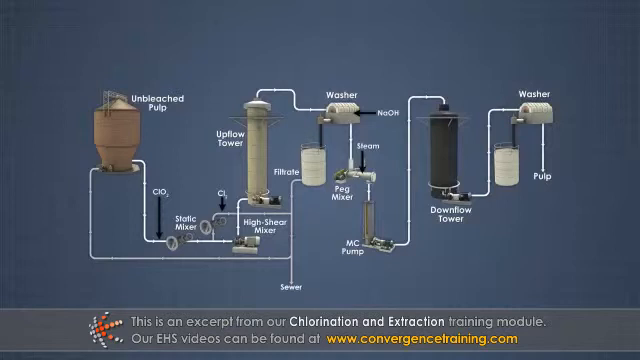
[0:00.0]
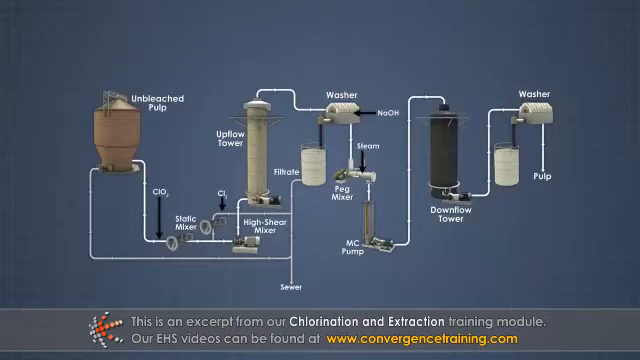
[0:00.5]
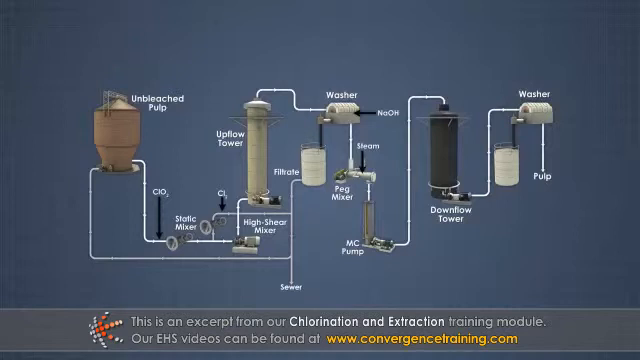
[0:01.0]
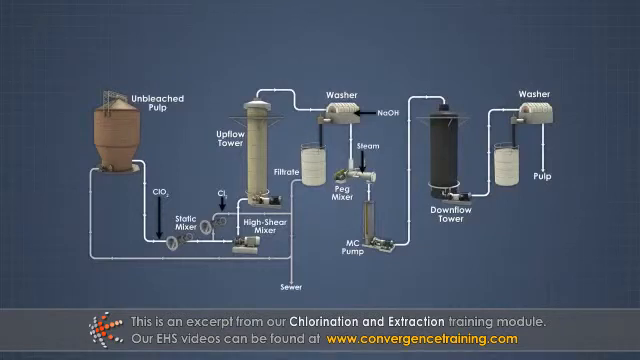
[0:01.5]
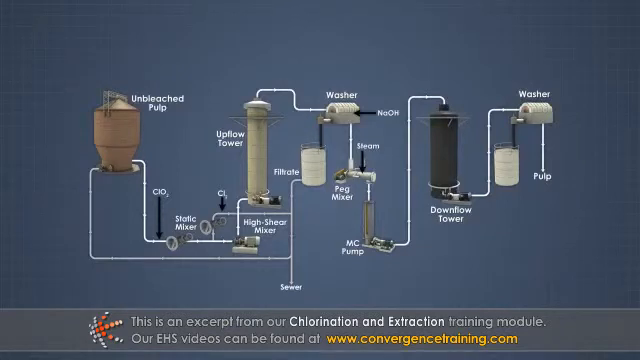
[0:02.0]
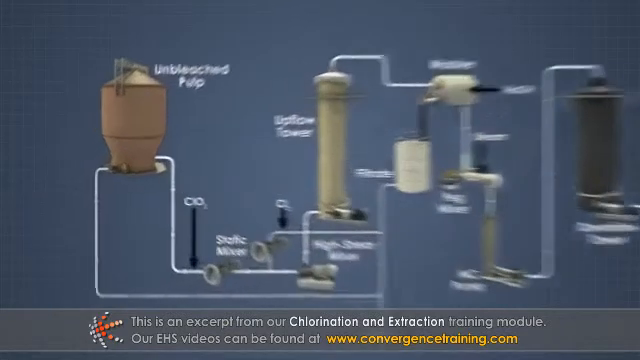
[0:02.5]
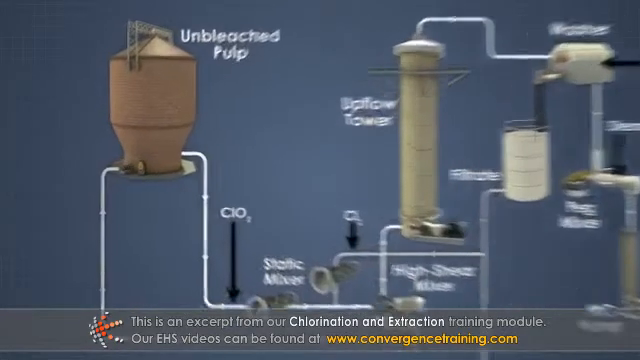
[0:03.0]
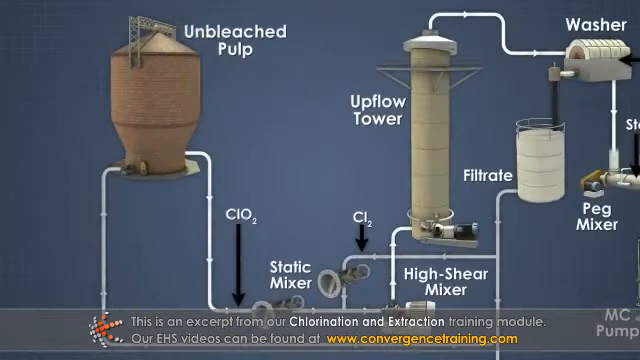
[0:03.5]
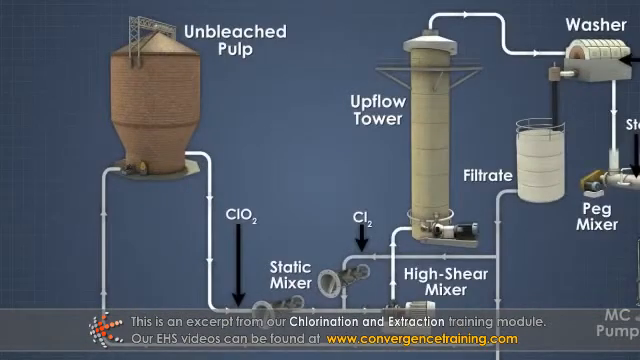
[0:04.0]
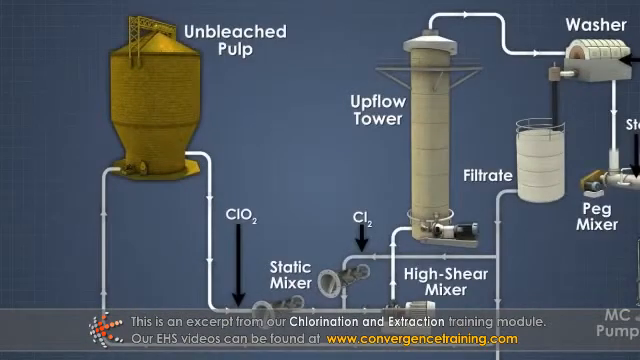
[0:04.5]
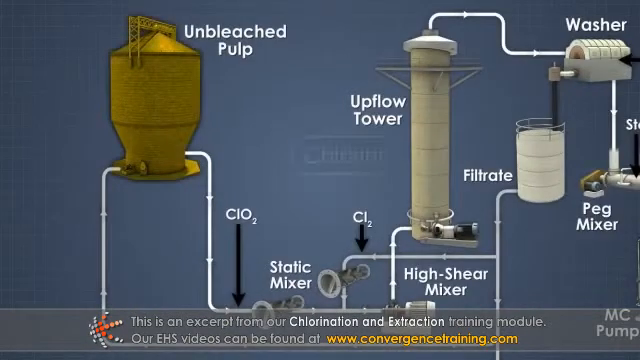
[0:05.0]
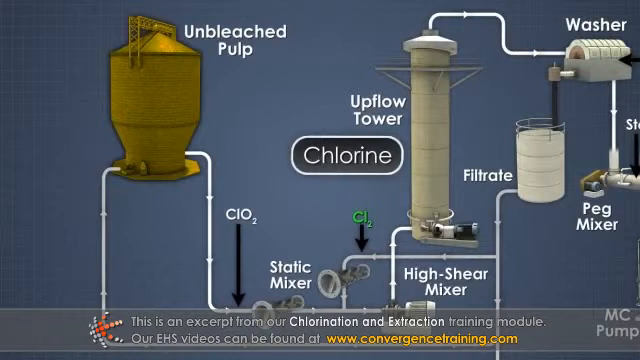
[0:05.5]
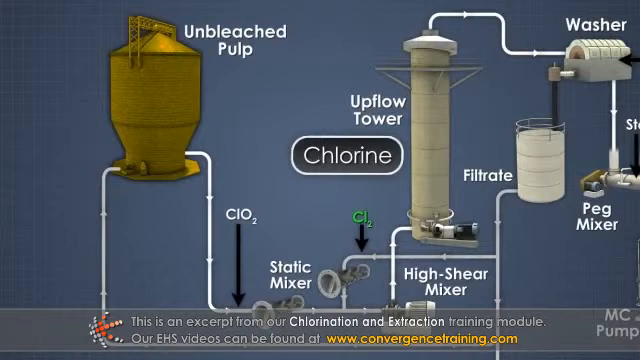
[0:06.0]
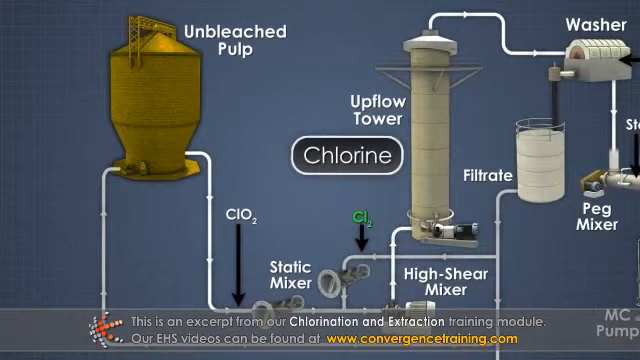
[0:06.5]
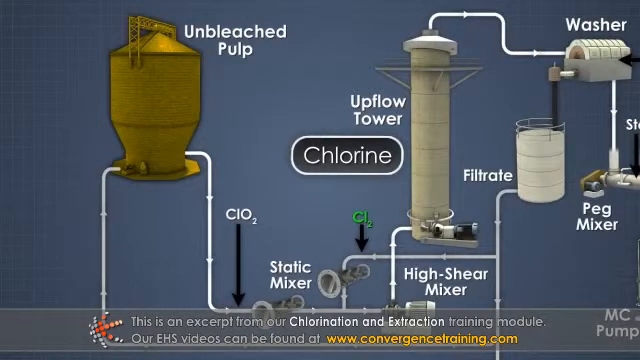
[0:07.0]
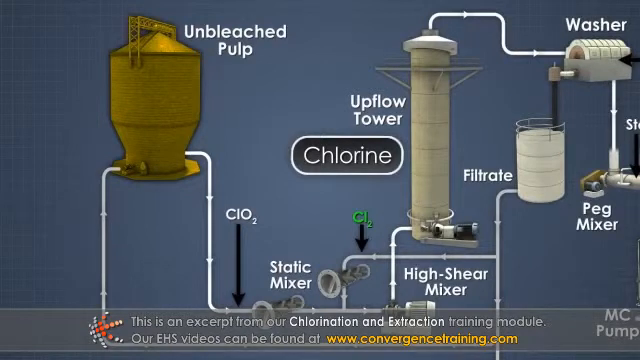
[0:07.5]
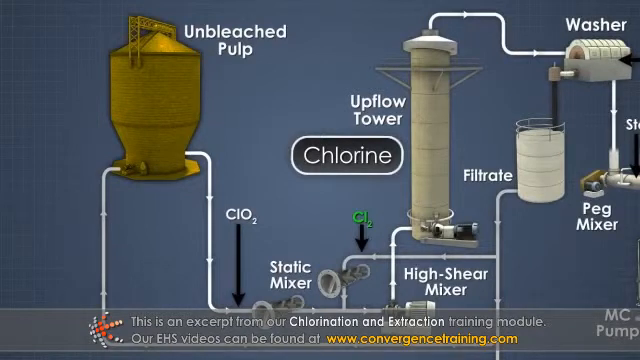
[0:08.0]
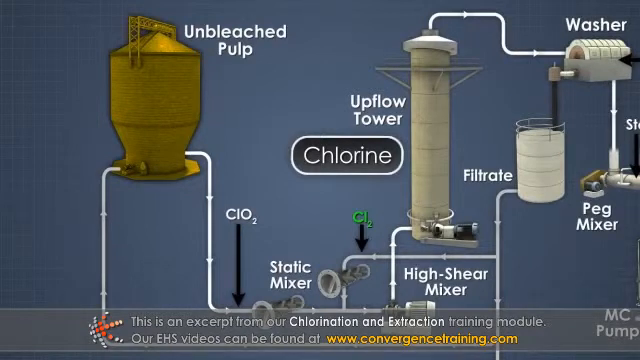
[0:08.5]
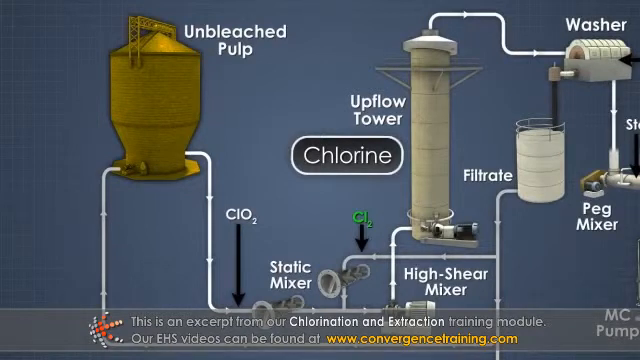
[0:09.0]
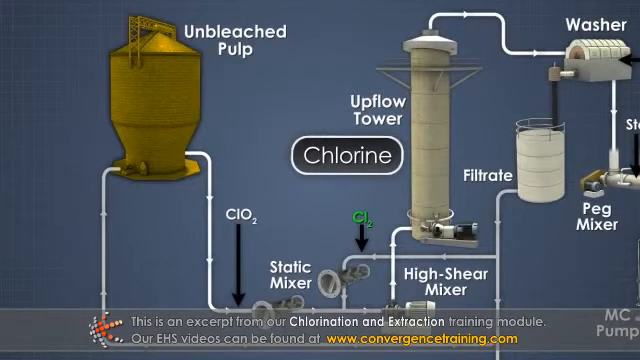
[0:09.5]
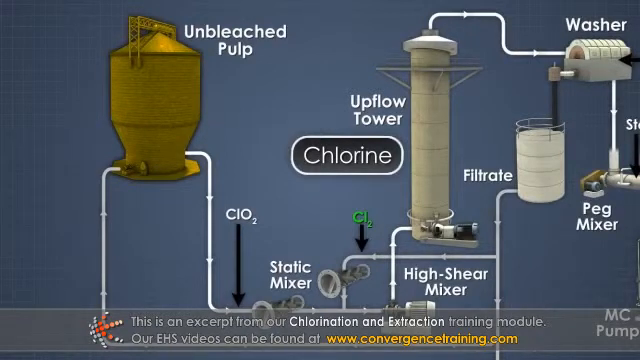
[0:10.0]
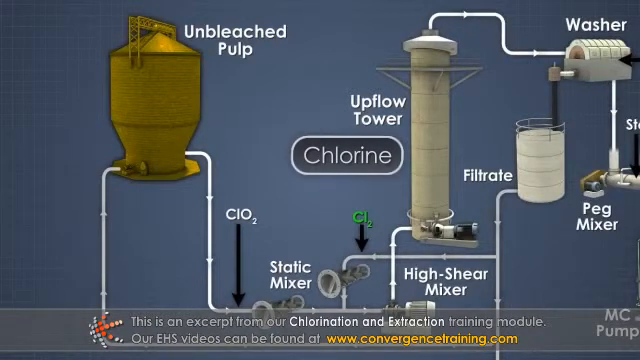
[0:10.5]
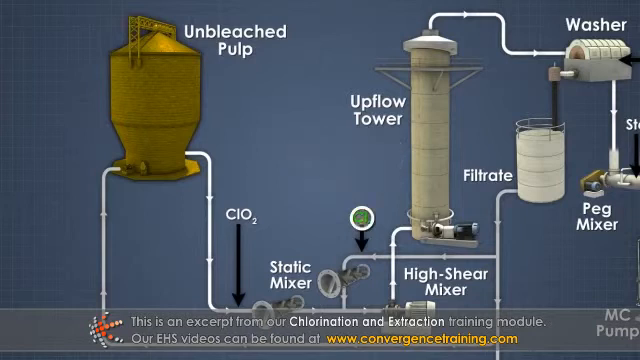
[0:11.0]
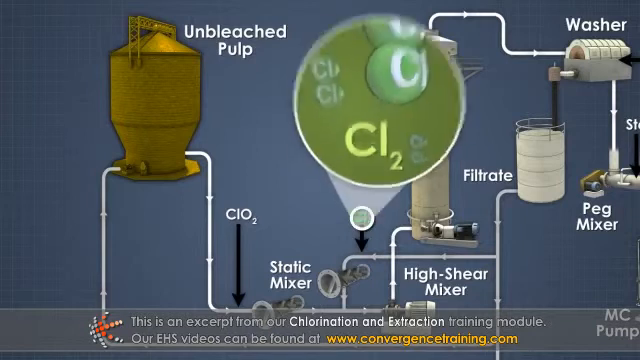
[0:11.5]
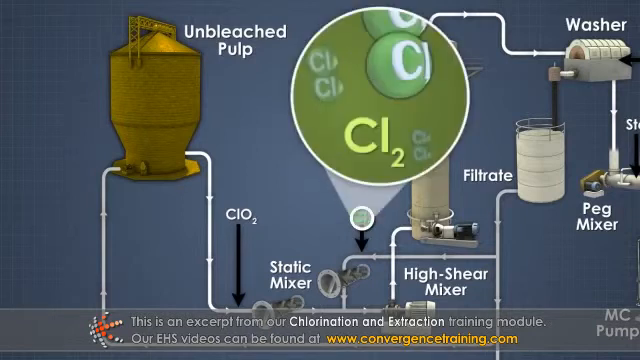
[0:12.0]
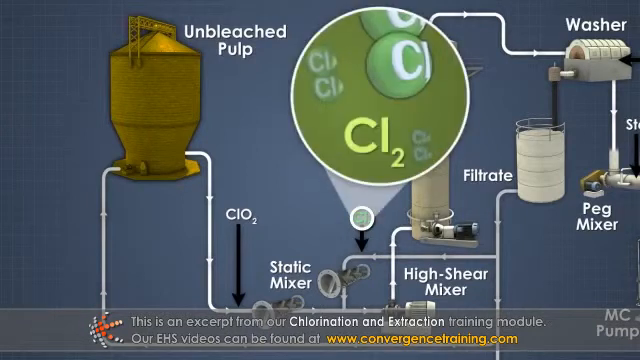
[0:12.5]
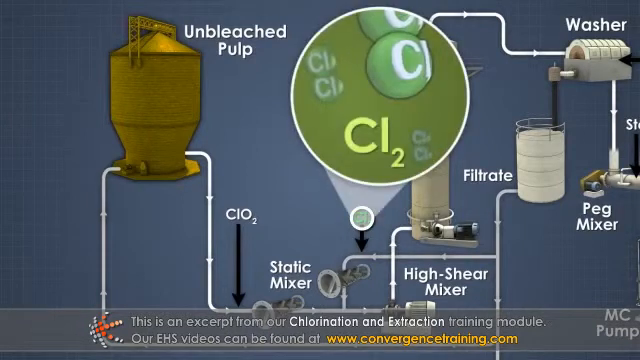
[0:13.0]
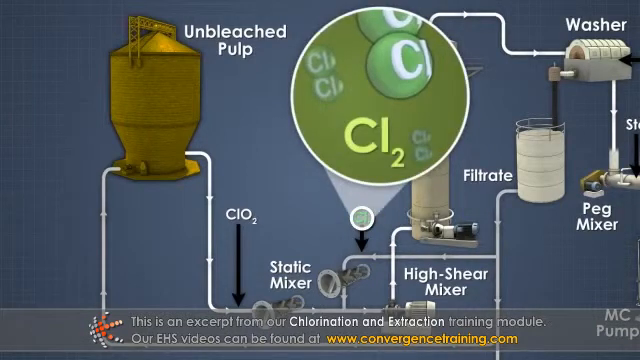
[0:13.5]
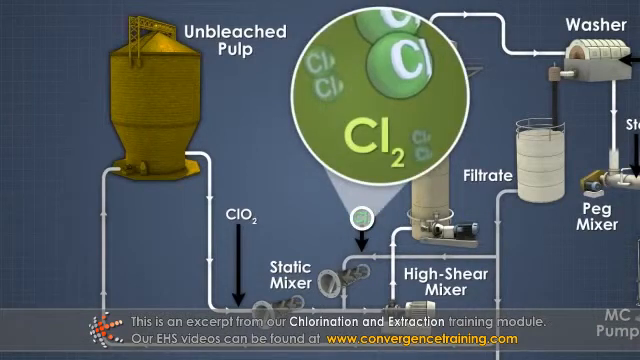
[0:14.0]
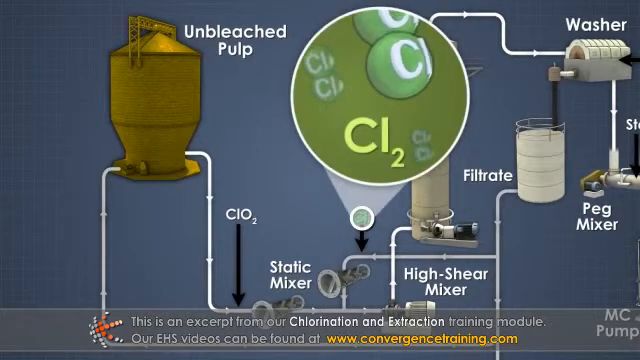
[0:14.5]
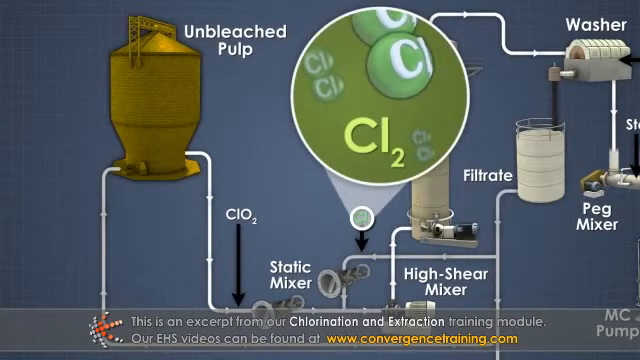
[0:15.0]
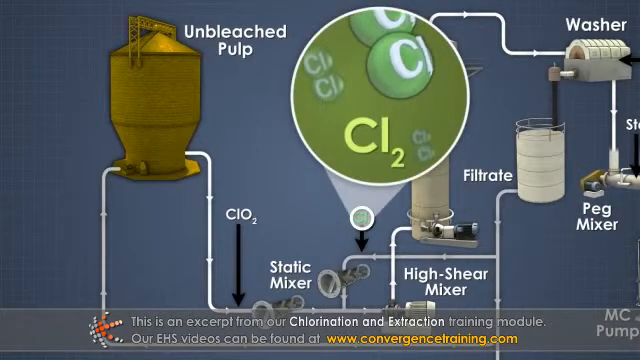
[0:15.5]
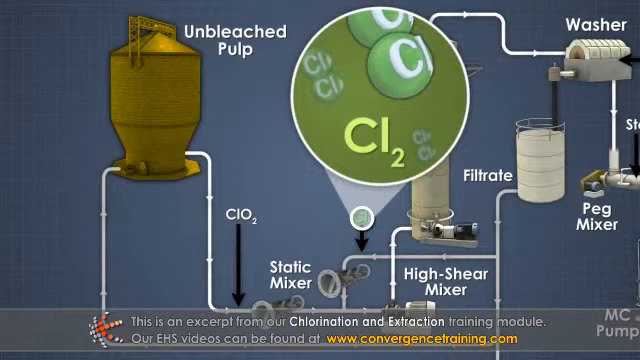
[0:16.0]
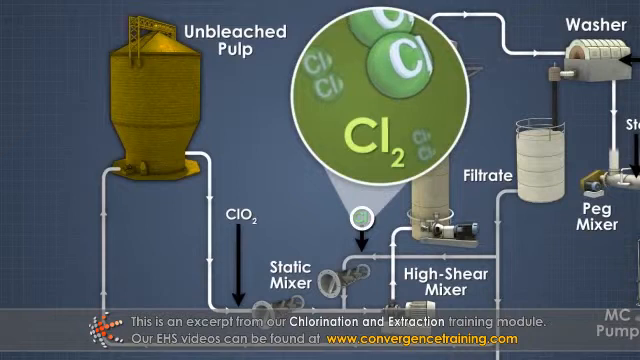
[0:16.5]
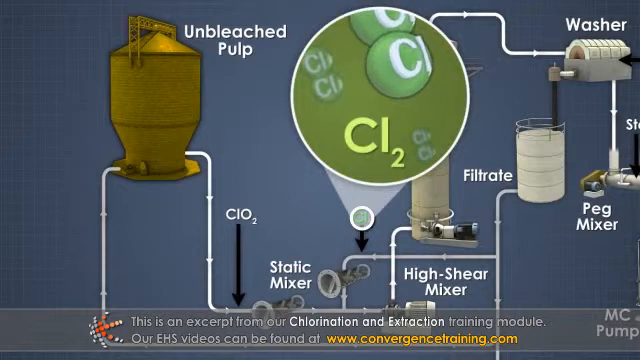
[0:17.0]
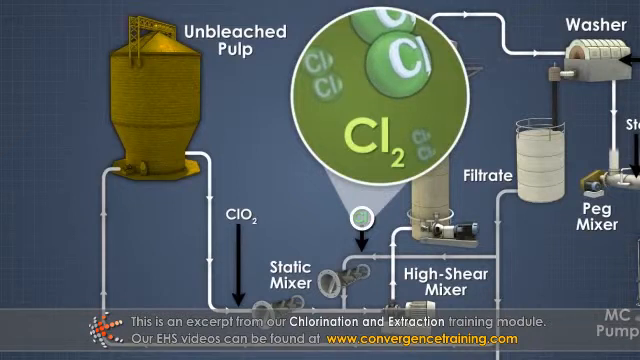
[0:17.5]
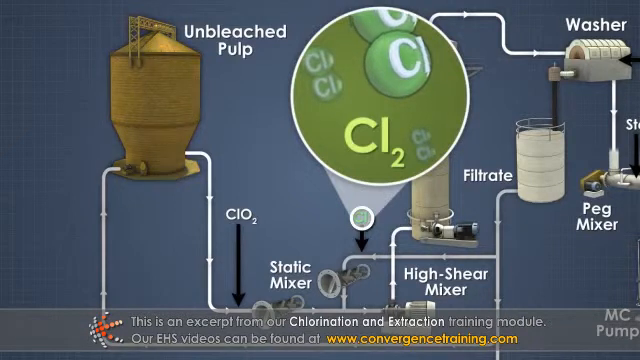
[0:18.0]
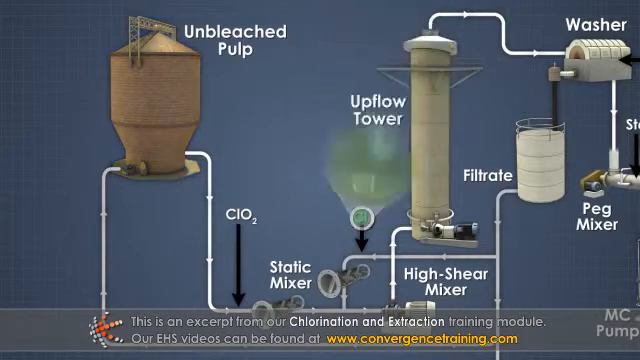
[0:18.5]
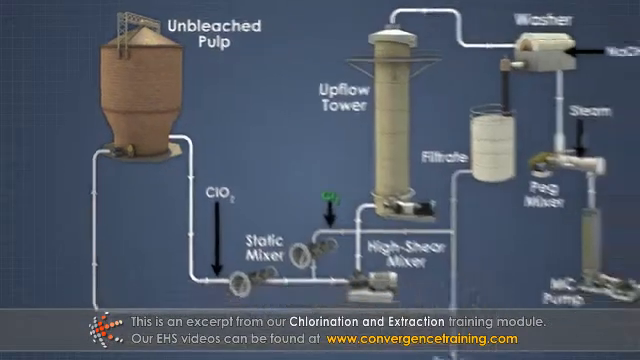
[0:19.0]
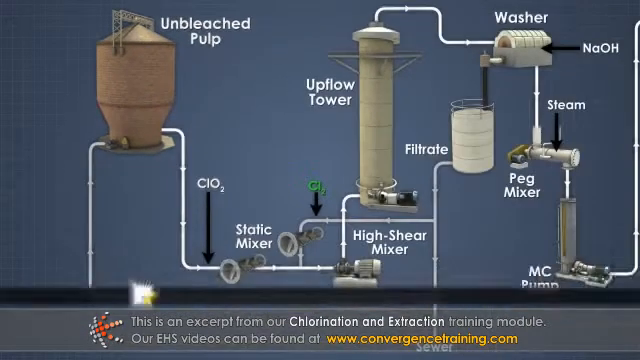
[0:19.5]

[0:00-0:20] A schematic system begins with the unbleached bulb recipient, going down toward a static mixer. A CL2, chlorine-like image is highlighted in green, and the flow then goes to the high shear mixer. This is part of the overall schematic. The background is blue, the unbleached bulb recipient is highlighted in an orange-ish colour, and the chlorine, labeled as such, is highlighted in green. This seems to be the first step of a process. A caption at the bottom reads "This is an excerpt from our chlorination and extraction training module".